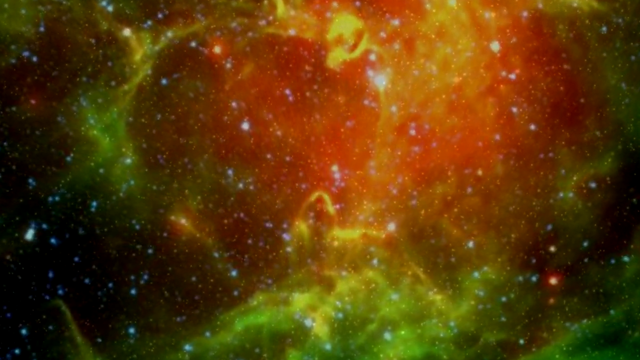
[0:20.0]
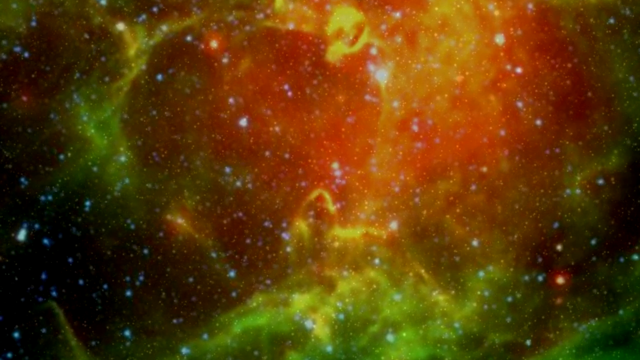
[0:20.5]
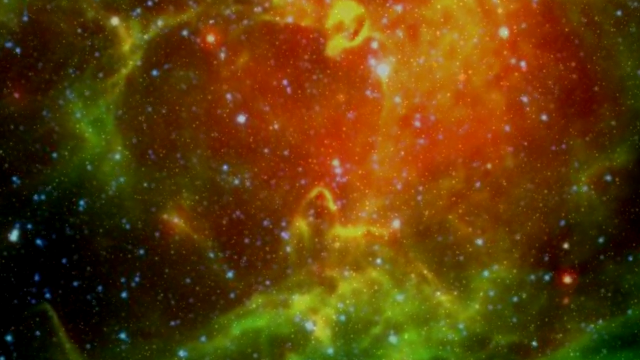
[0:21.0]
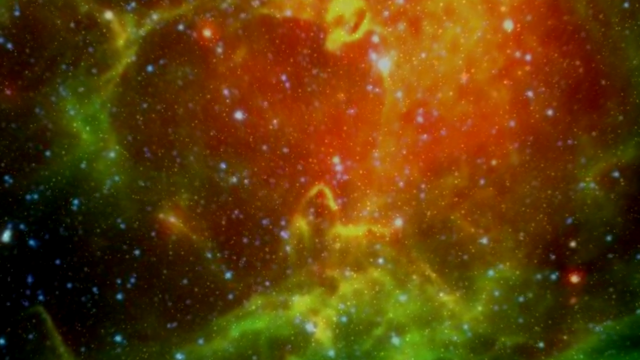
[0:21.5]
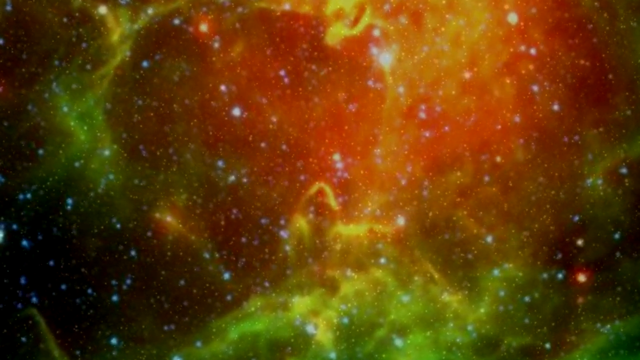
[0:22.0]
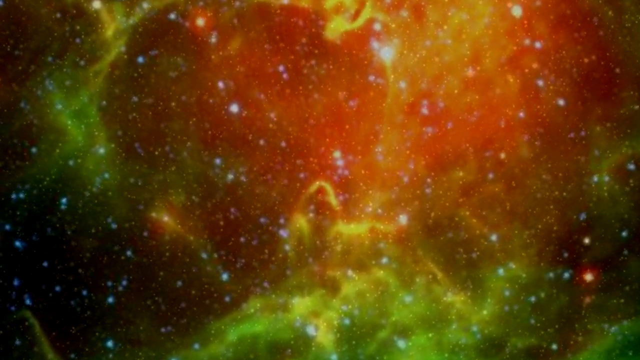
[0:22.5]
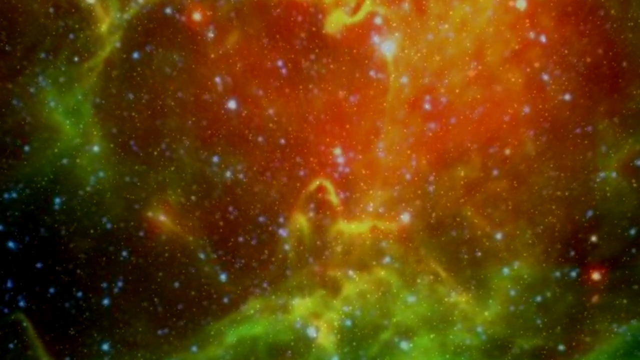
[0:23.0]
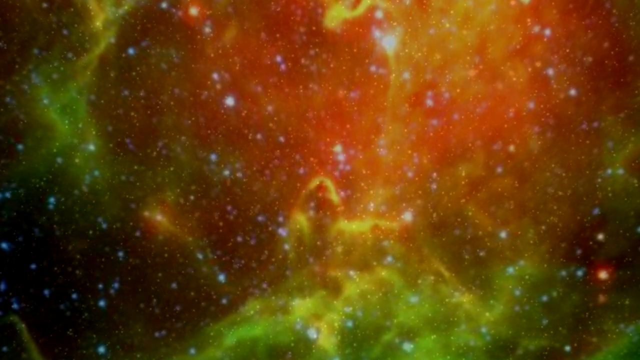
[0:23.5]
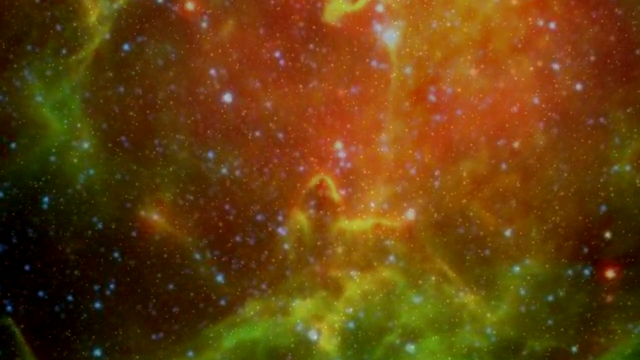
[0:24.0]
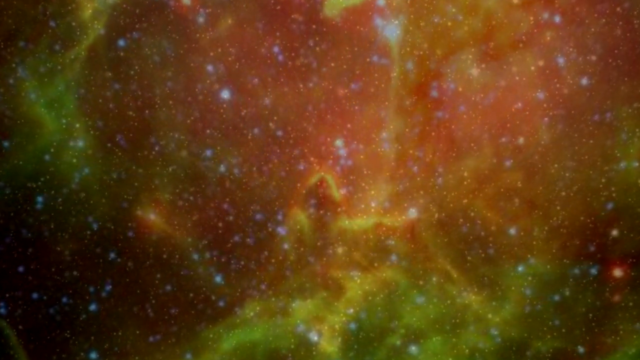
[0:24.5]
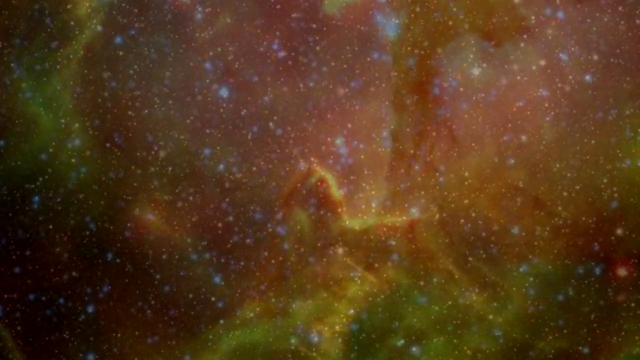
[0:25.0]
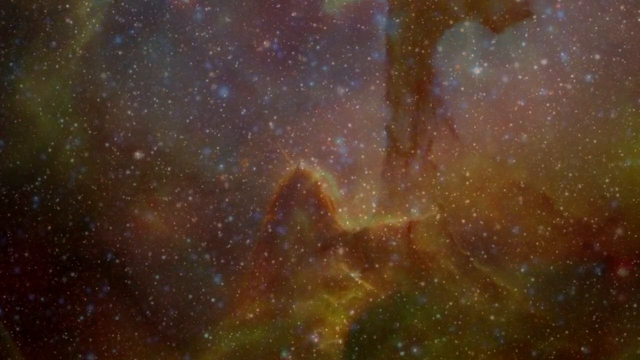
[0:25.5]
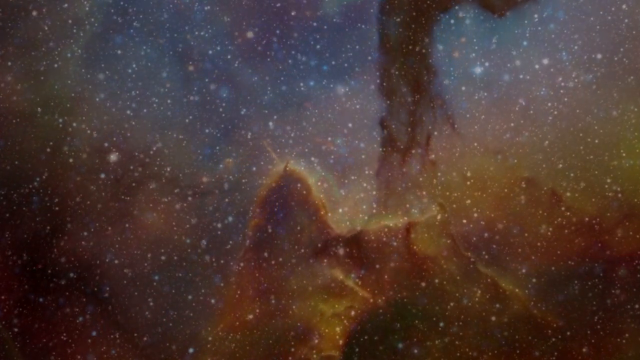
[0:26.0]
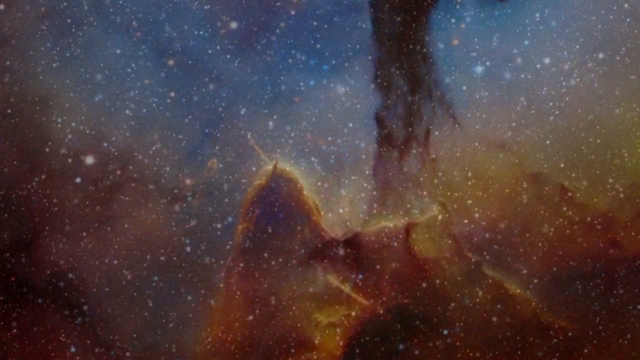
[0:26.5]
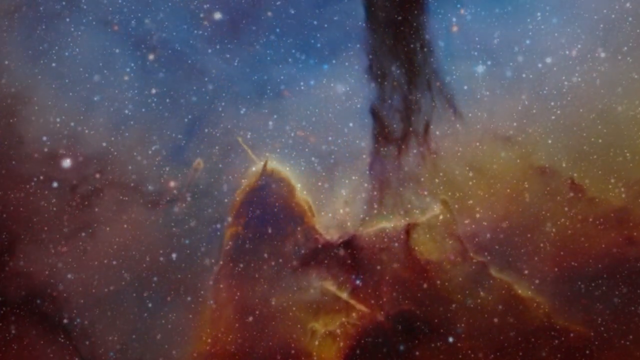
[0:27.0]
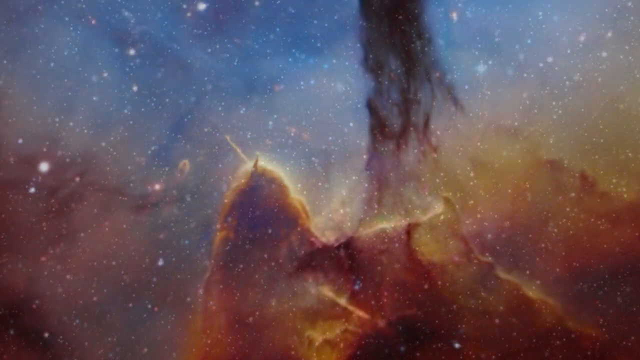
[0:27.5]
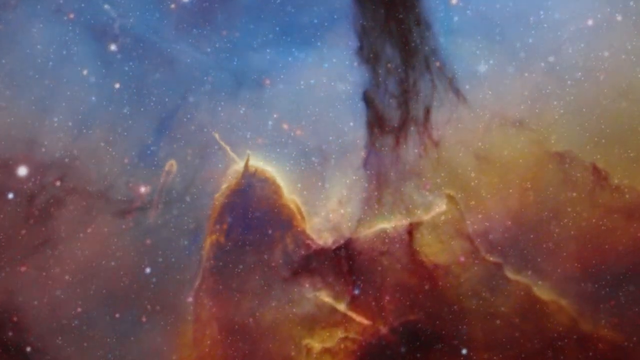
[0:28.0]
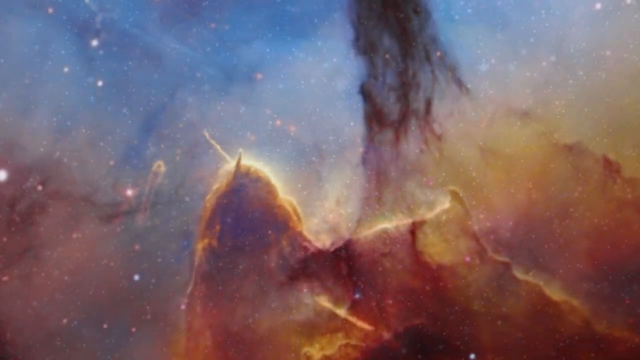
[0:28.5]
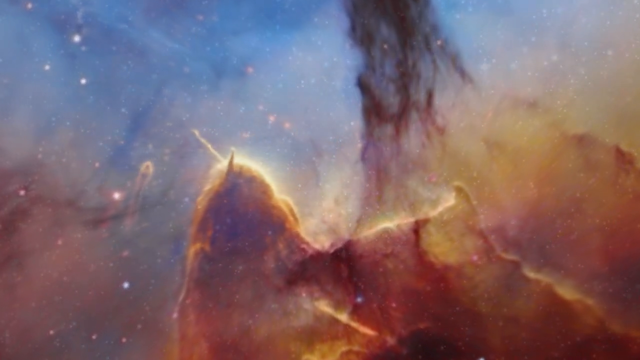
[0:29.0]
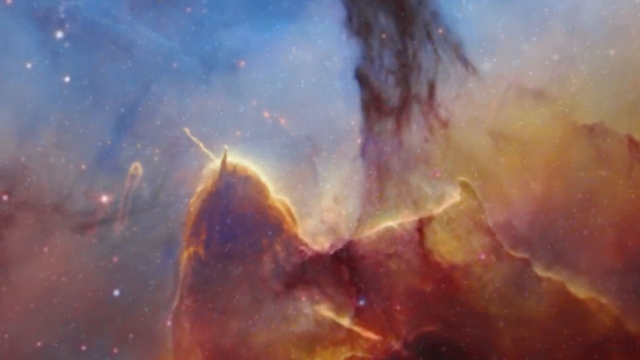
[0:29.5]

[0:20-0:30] A large image of yellow, red and green takes up pretty much the whole screen. It then fades to another view with different colors, somewhat like clouds though not really clouds. What look like black tendrils come down from roughly the upper right-hand side. At the top, the image is kind of blue turning to a milky white and then a reddish yellow.